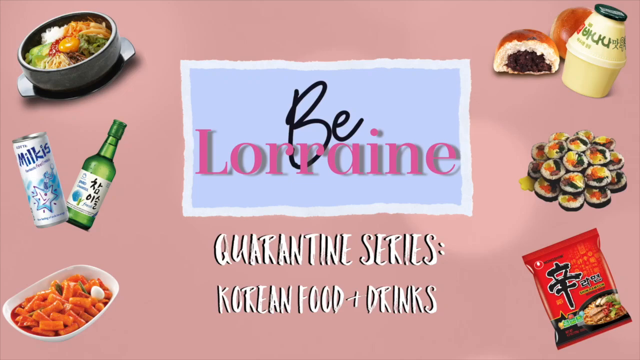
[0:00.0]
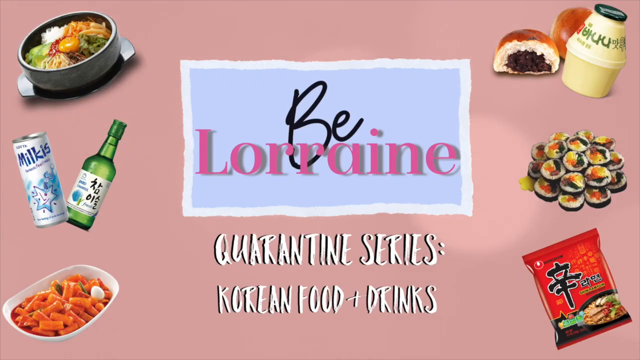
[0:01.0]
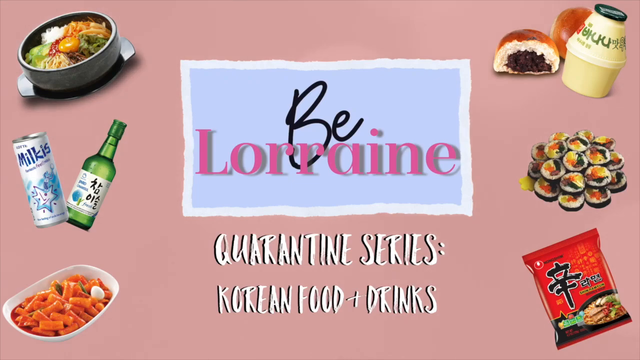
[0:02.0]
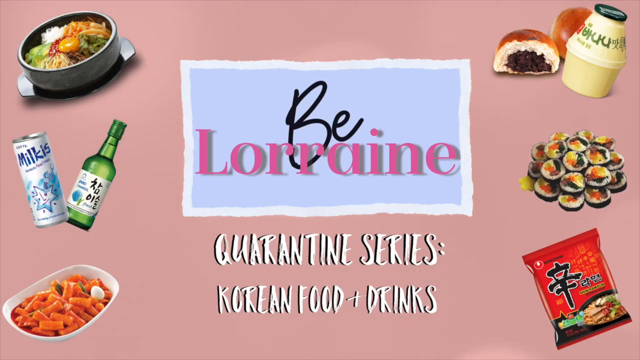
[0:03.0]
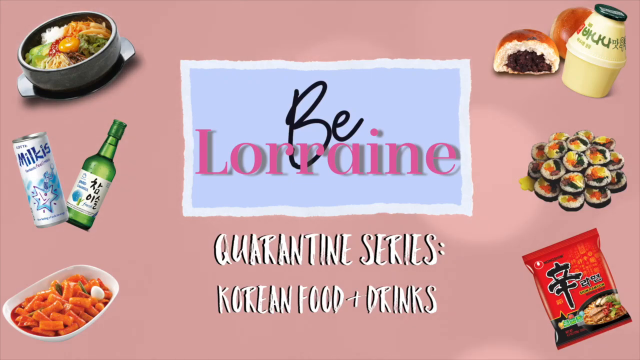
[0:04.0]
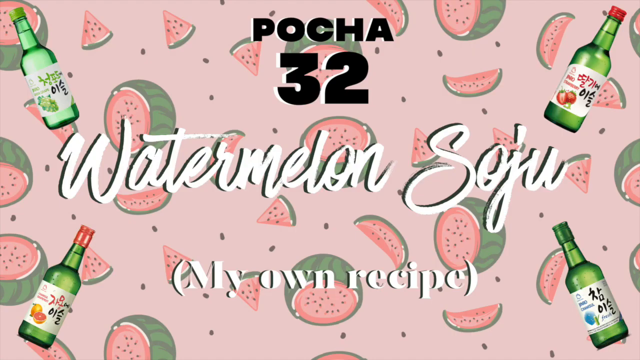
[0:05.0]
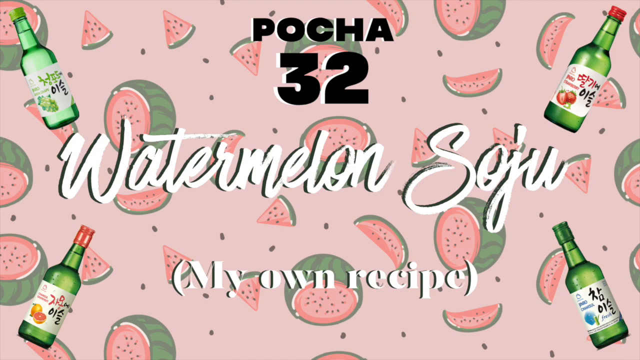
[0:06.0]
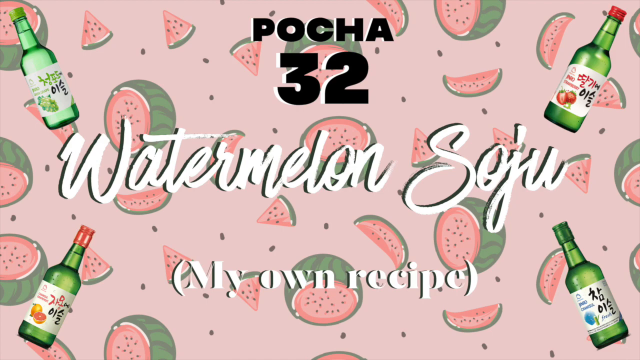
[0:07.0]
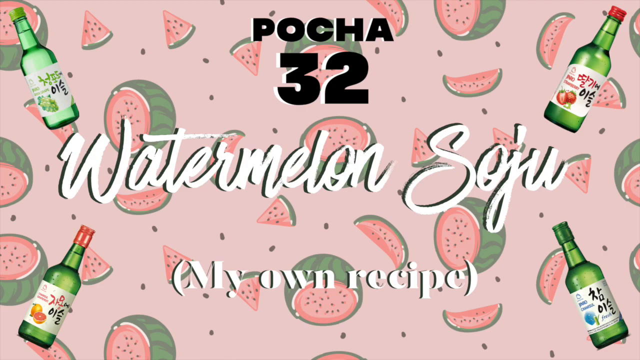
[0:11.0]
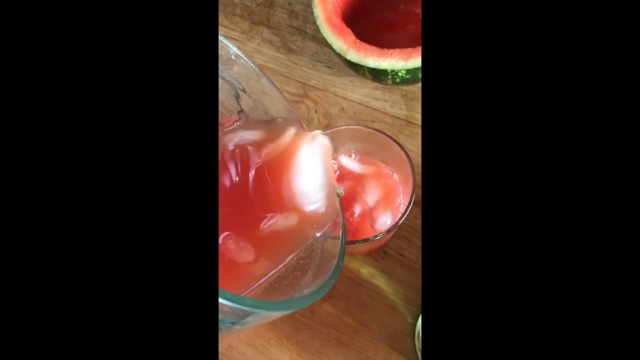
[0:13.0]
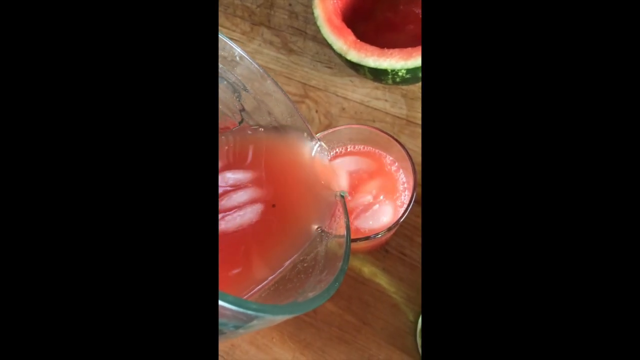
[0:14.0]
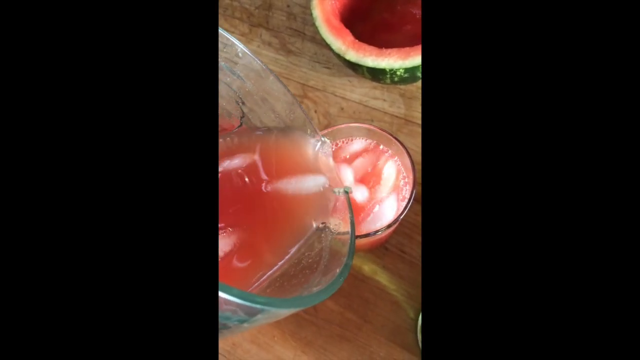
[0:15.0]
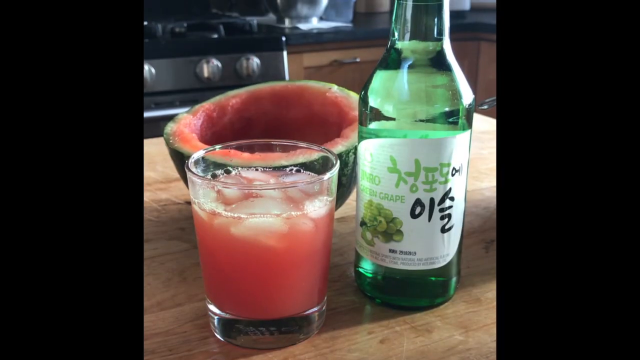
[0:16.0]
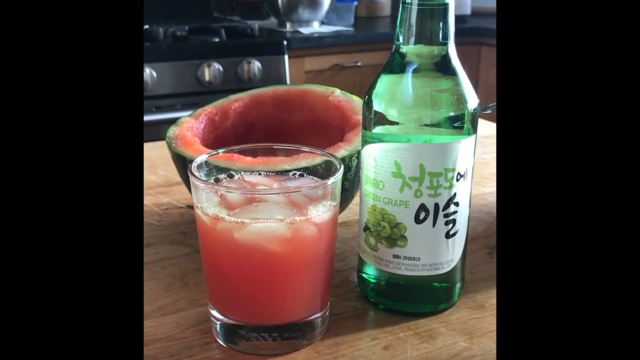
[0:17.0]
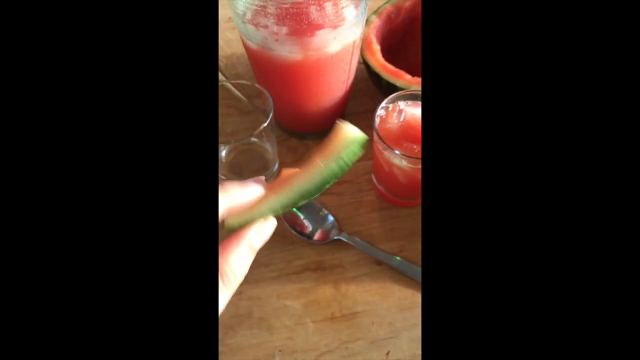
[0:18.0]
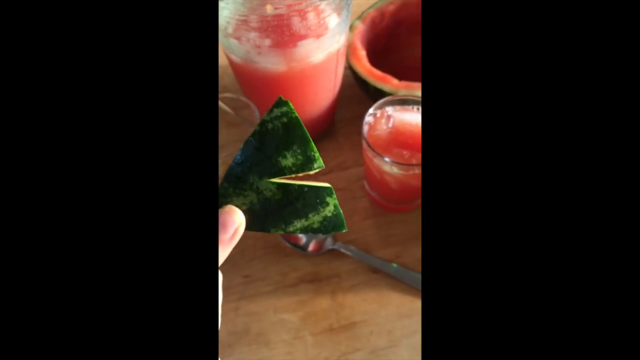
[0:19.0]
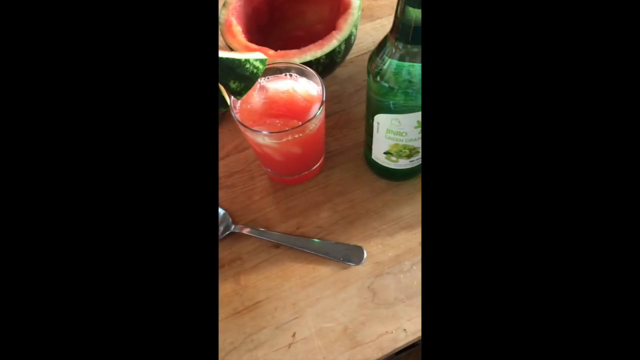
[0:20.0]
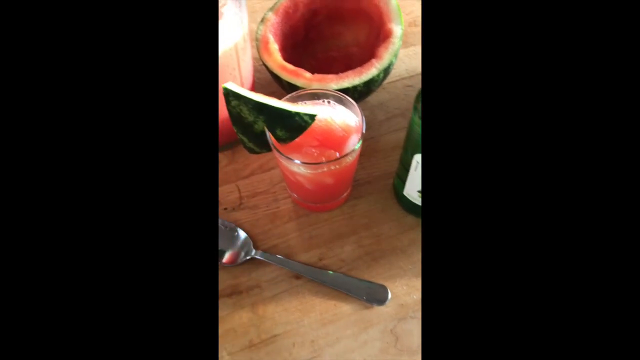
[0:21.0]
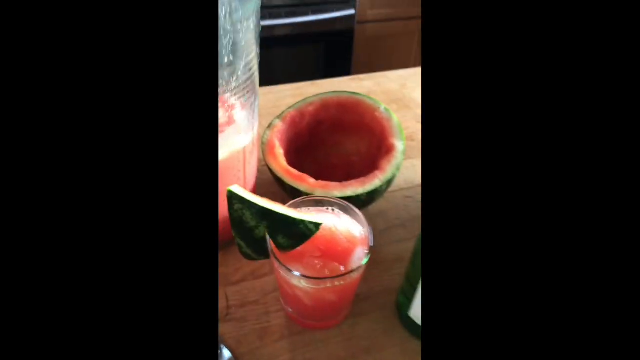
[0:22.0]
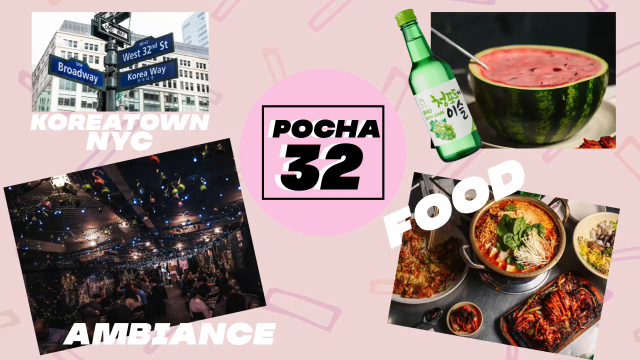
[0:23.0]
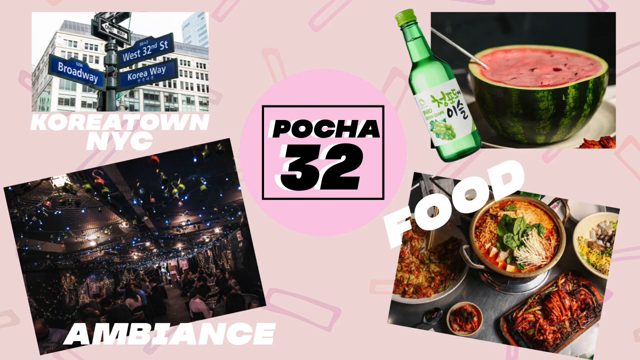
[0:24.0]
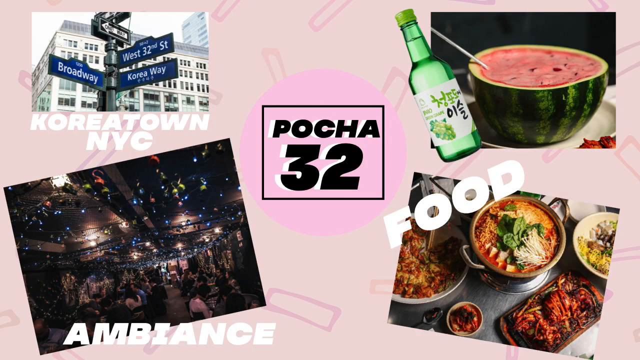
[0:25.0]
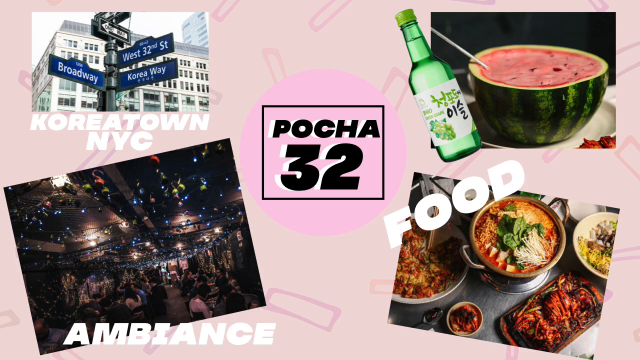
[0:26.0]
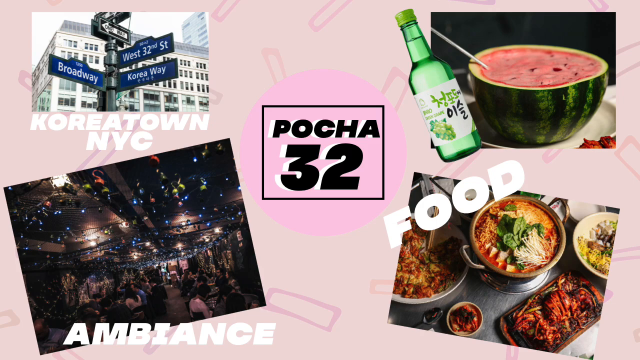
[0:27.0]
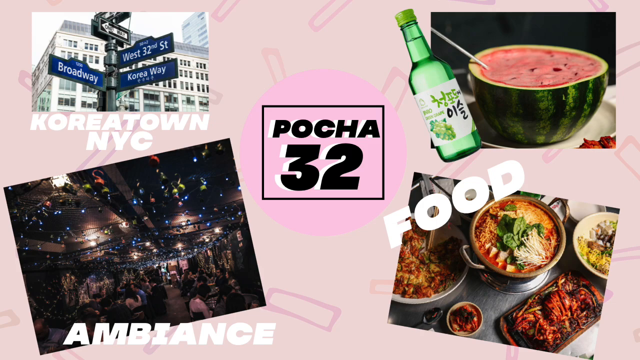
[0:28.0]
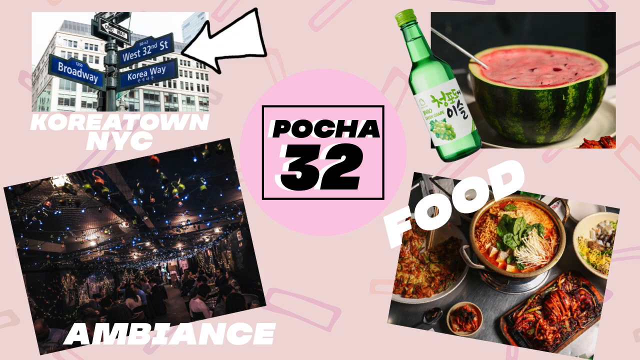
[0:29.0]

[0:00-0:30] In the center of the screen, a light blue box reads "be Lorraine." Beneath the box, white text reads "quarantine series:" and below that "Korean food and drinks." To the right and left of the blue box, on a pink backdrop, are various Korean foods and drinks: a pot with some food in it, a can and a bottle, a casserole dish that appears to have food in it, and a package of what looks like it could be noodles with Korean text on it. The screen then changes to "watermelon soju" in white letters, followed by a shot of someone pouring some kind of watermelon drink with ice into a glass and placing a wedge of watermelon on the edge of the glass as a garnish. The video then cuts to a street sign.